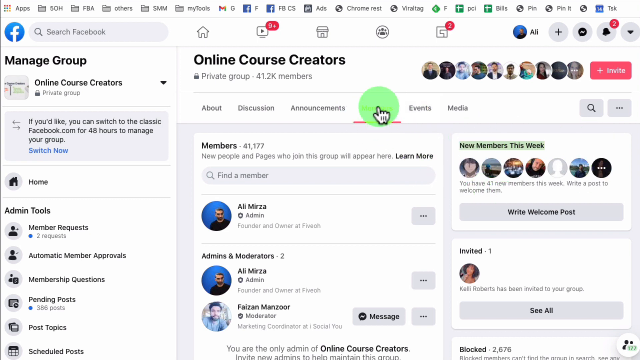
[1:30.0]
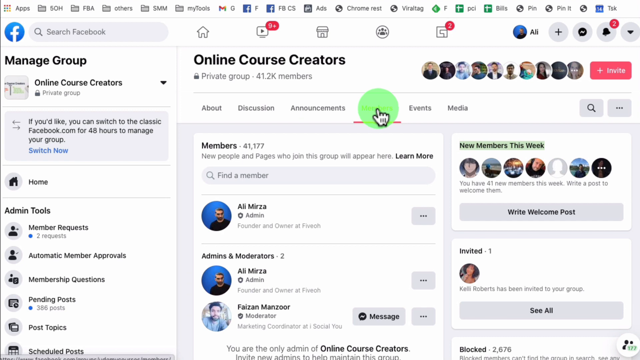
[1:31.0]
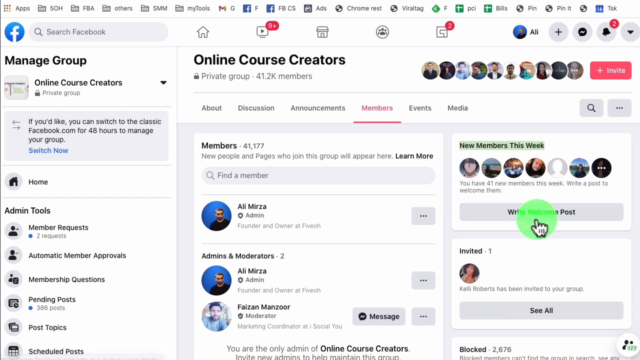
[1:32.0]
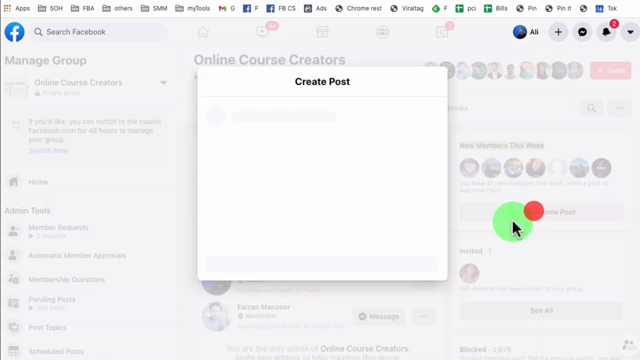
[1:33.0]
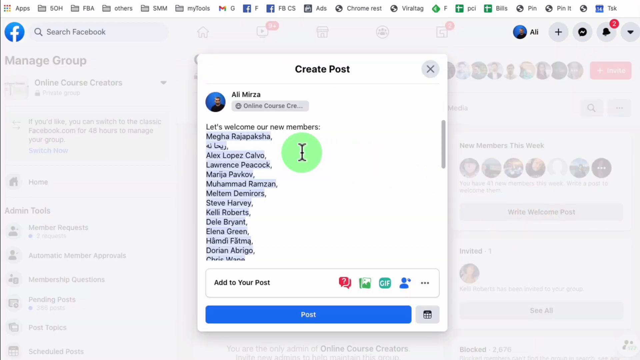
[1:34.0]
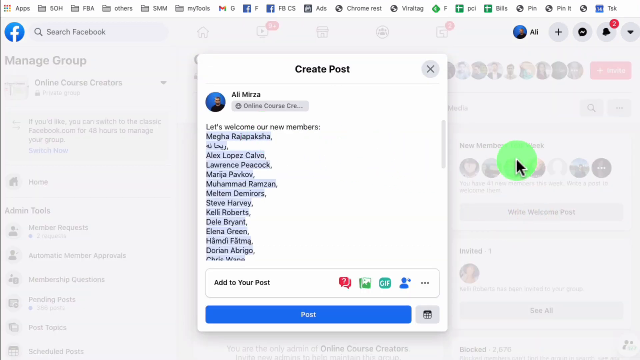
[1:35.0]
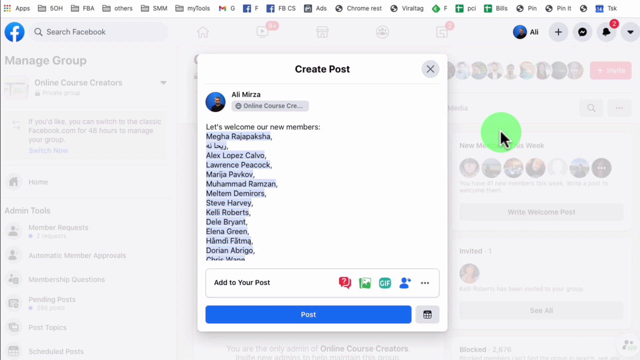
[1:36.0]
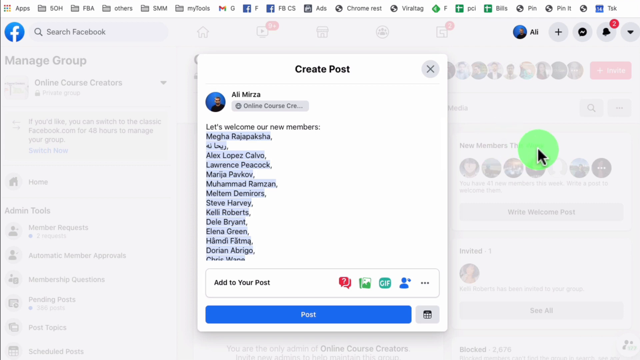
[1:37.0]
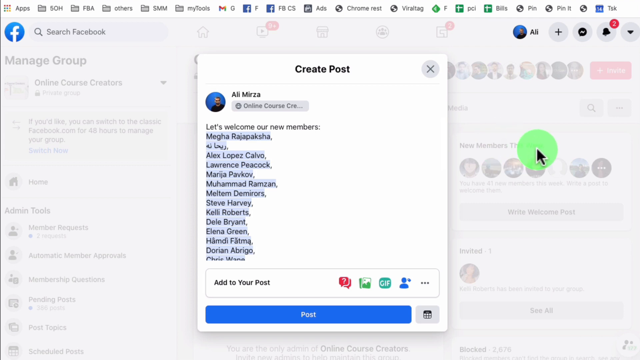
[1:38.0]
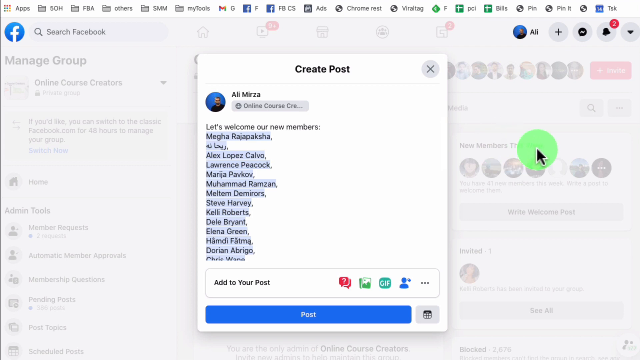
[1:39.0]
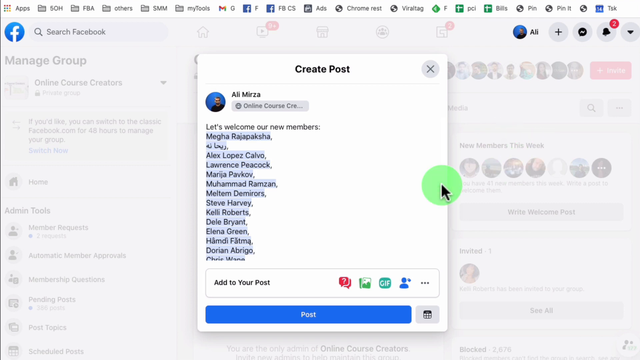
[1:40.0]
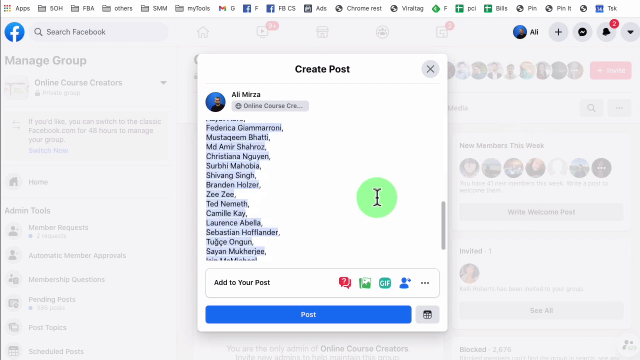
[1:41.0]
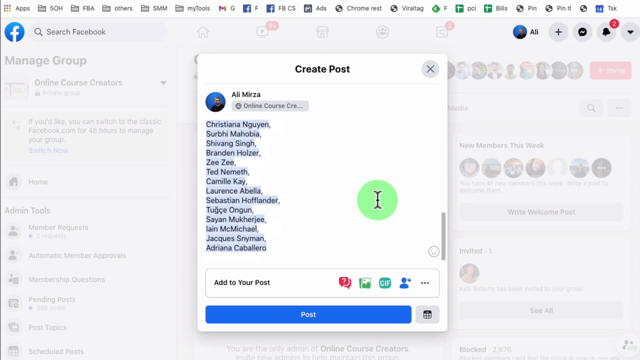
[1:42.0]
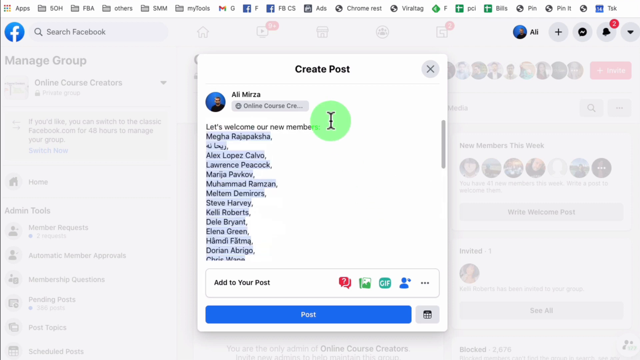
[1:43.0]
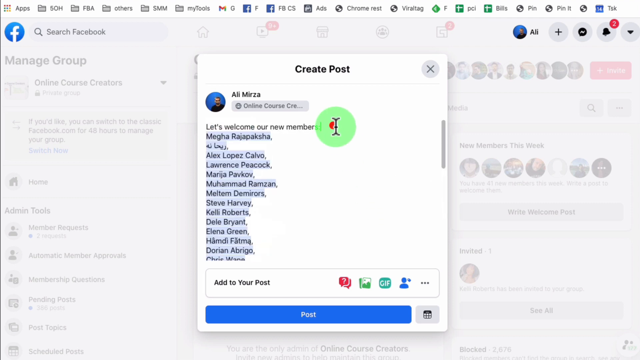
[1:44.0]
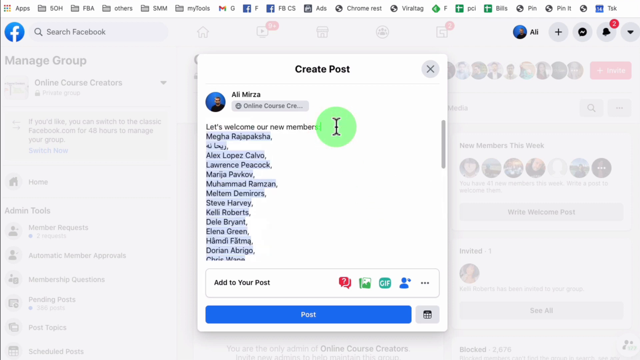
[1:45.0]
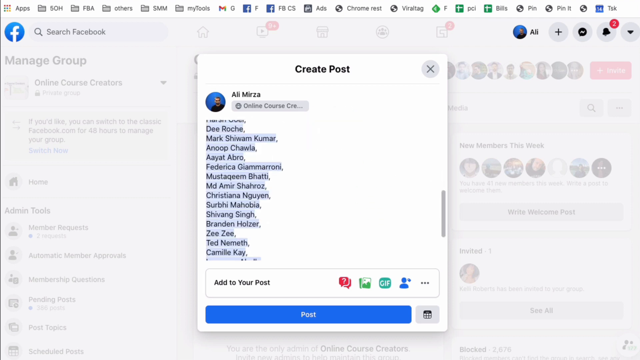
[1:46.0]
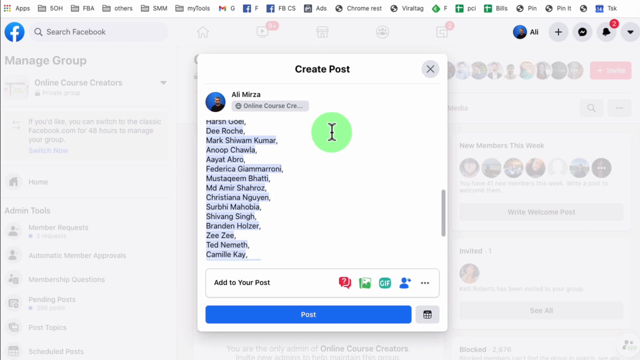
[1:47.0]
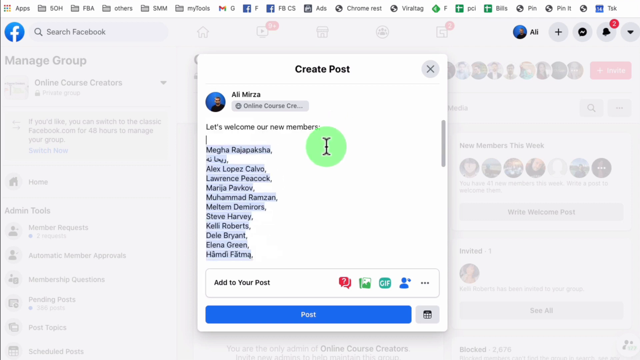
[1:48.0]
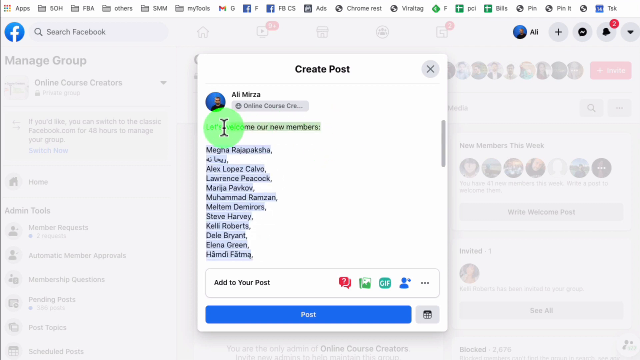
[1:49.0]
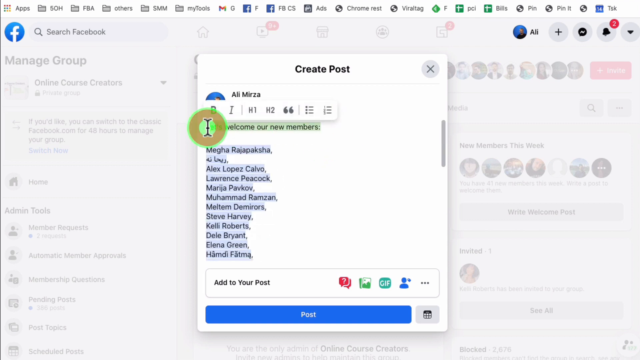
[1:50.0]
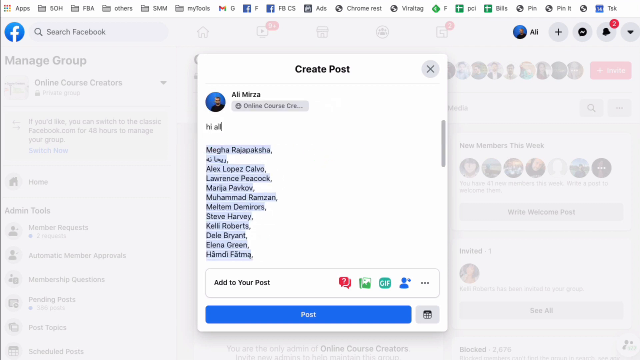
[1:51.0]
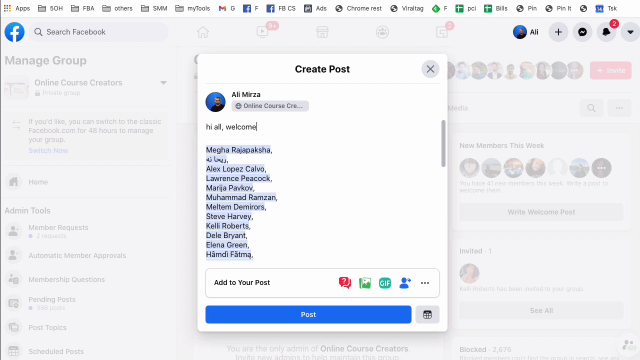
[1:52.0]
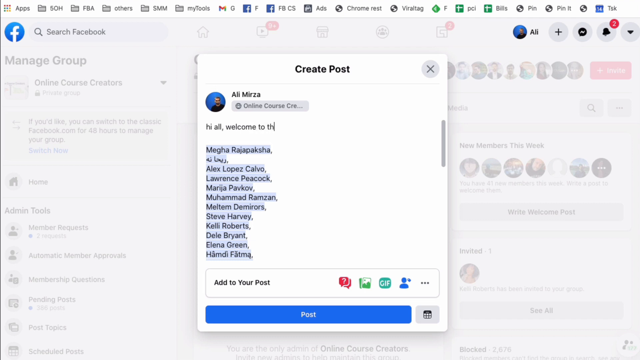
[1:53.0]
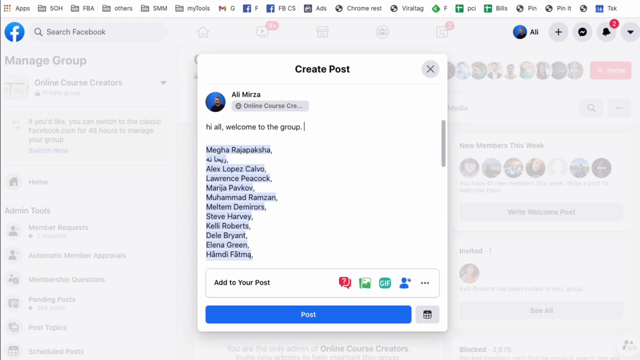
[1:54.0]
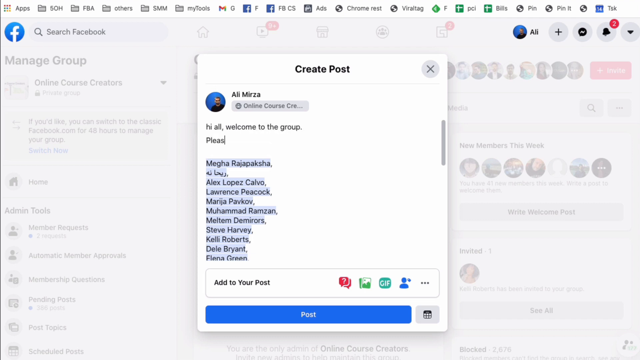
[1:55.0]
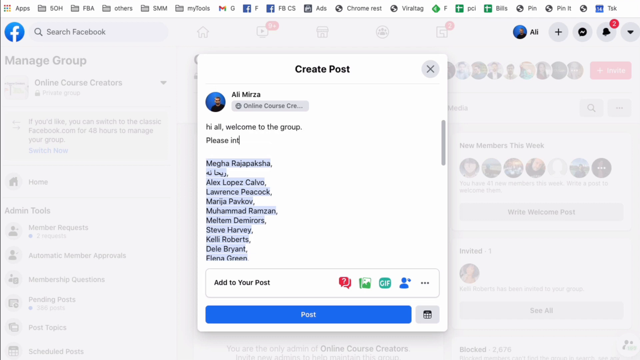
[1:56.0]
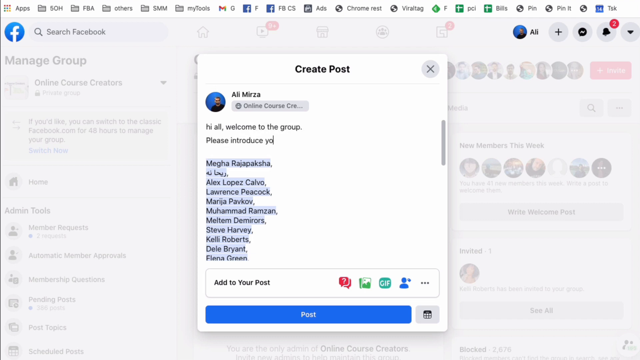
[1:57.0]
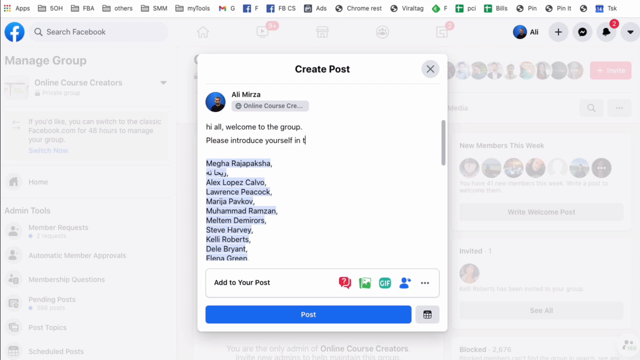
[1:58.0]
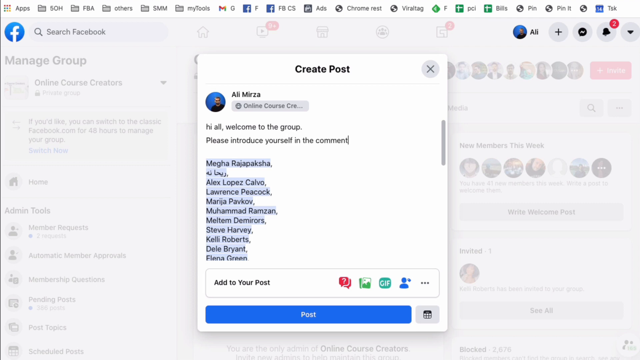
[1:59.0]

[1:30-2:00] The mouse starts creating a post and tags the new people who have just joined the group.